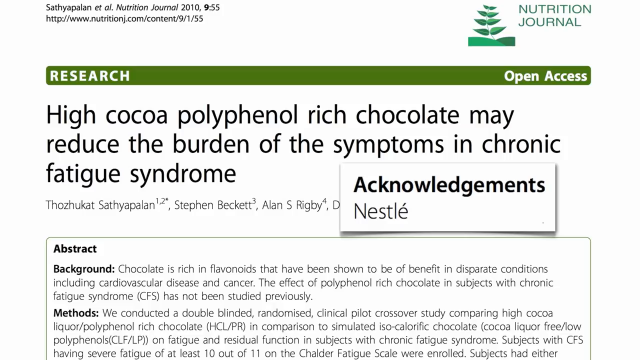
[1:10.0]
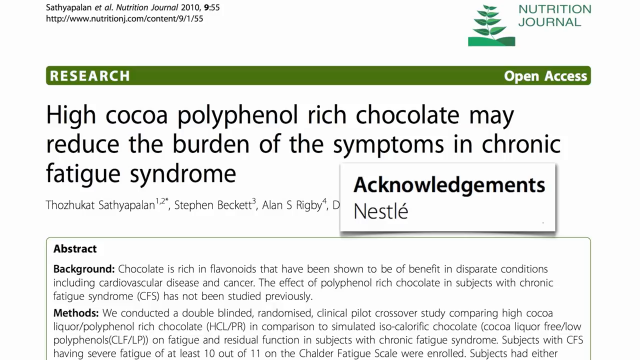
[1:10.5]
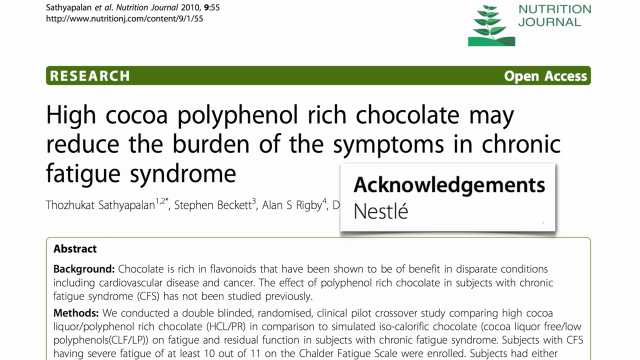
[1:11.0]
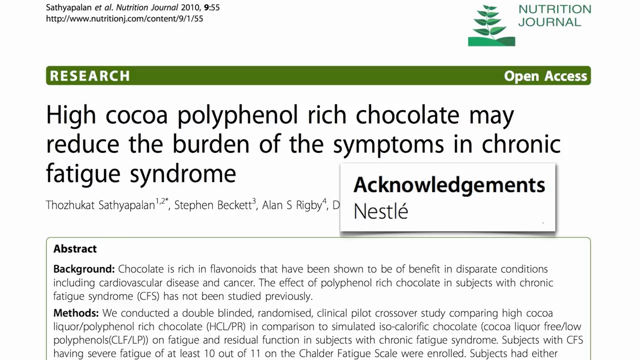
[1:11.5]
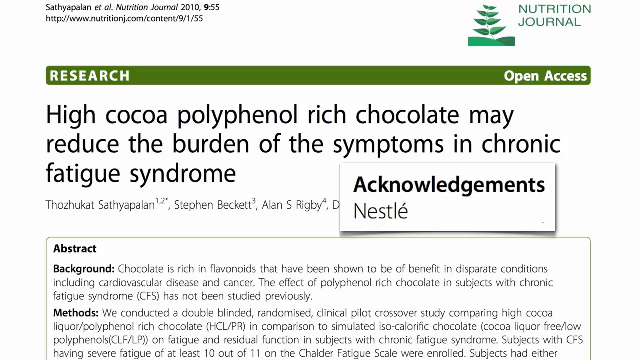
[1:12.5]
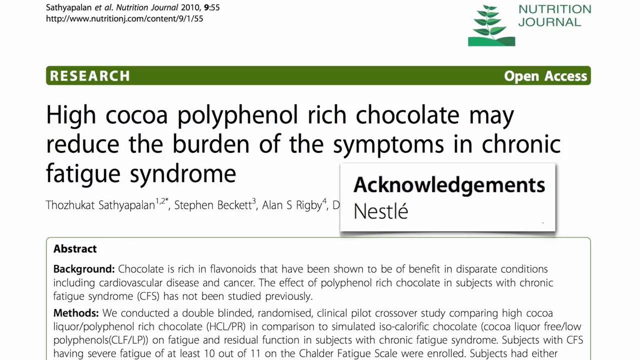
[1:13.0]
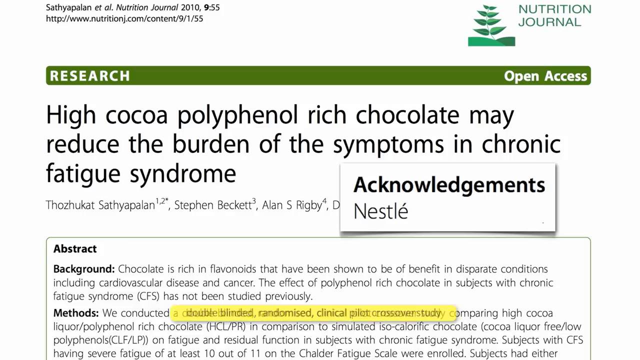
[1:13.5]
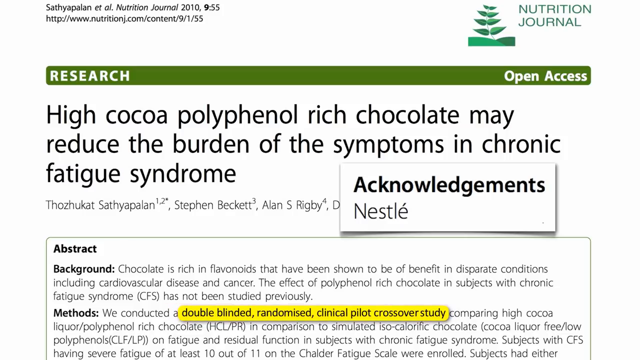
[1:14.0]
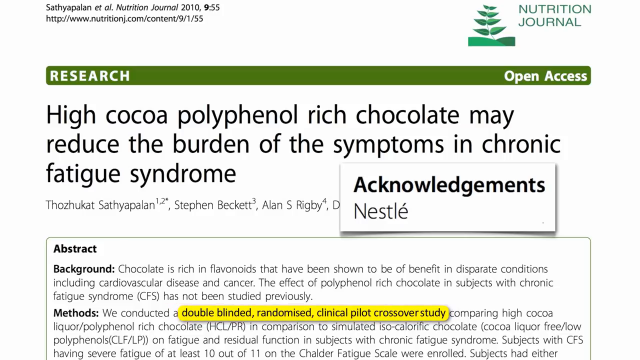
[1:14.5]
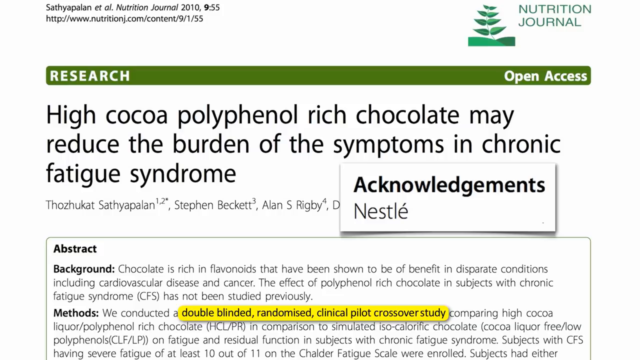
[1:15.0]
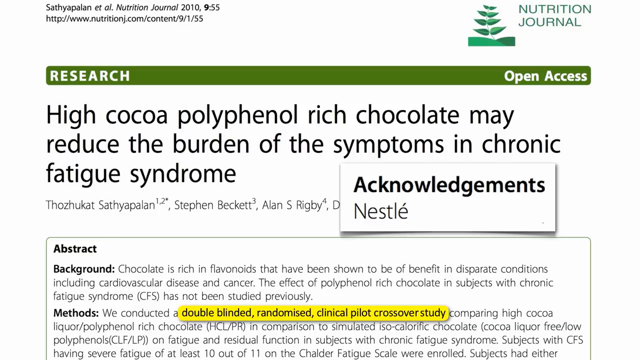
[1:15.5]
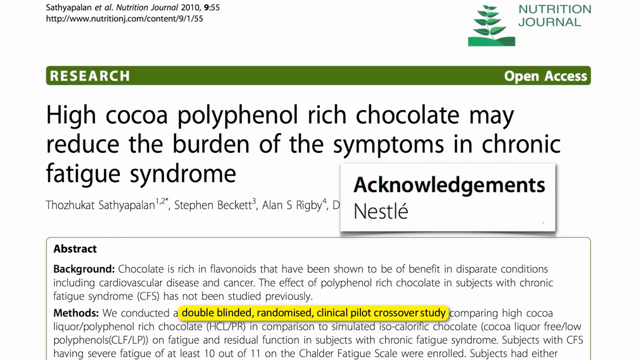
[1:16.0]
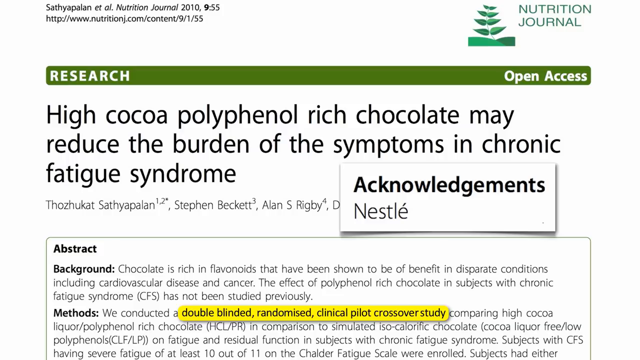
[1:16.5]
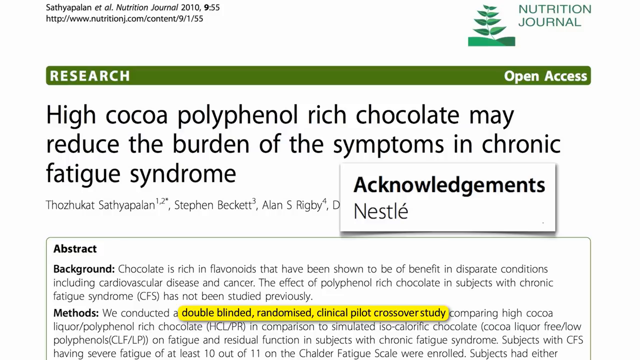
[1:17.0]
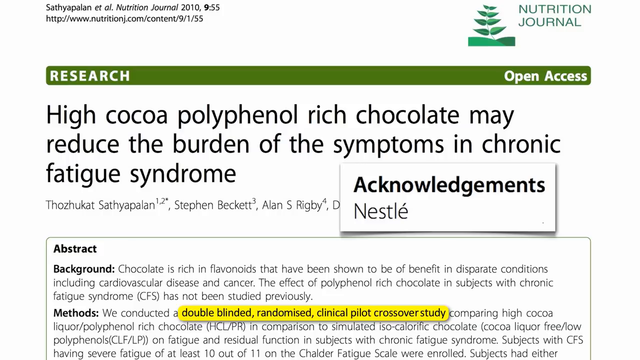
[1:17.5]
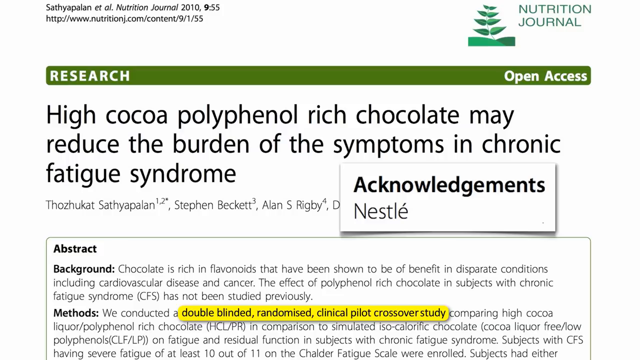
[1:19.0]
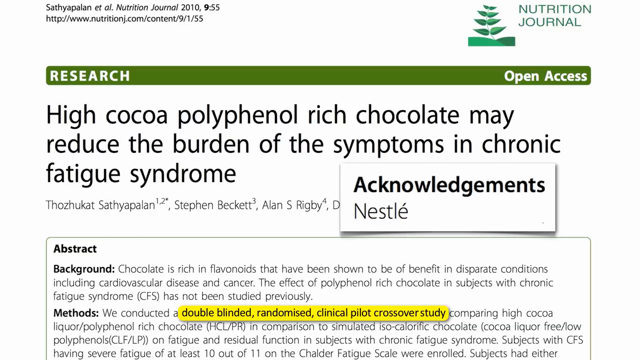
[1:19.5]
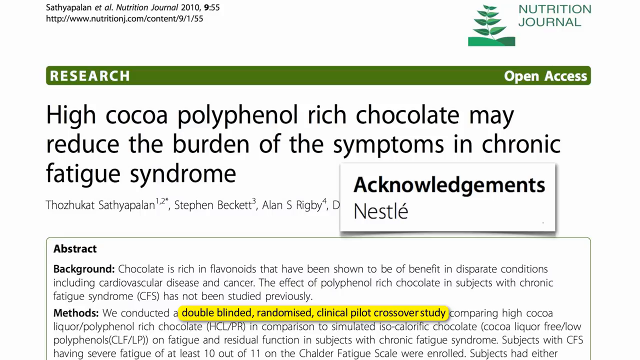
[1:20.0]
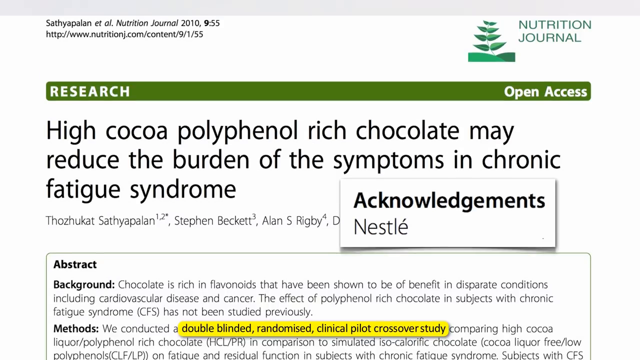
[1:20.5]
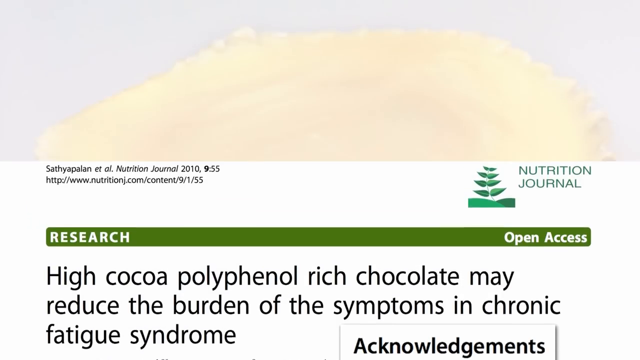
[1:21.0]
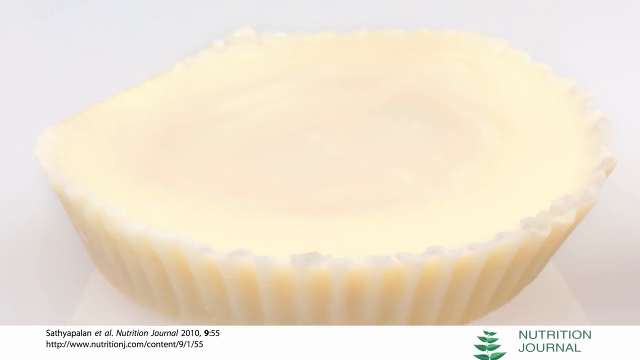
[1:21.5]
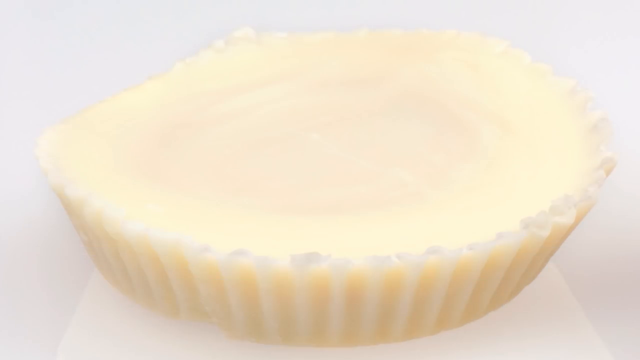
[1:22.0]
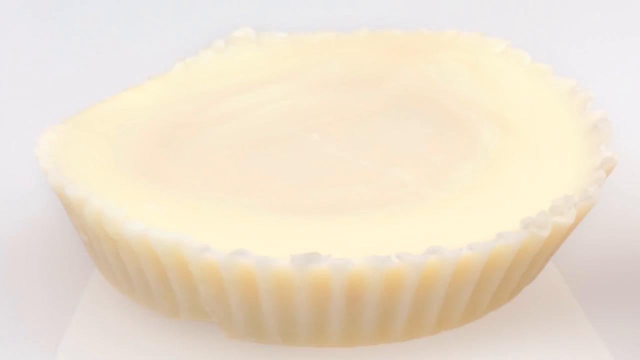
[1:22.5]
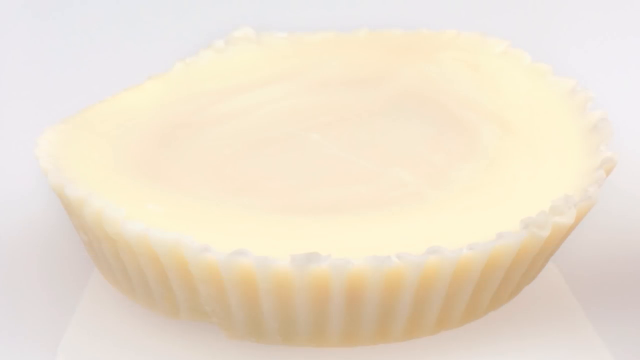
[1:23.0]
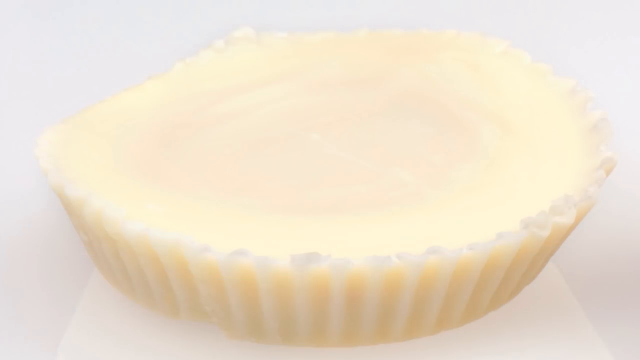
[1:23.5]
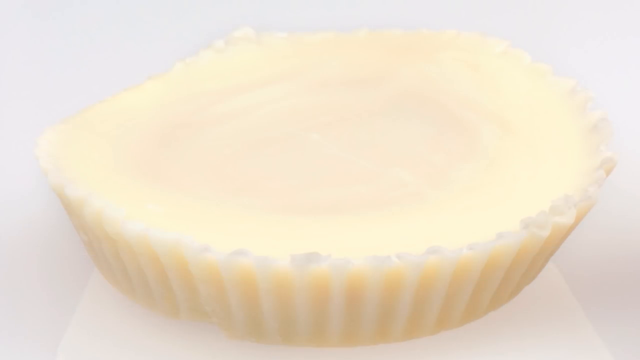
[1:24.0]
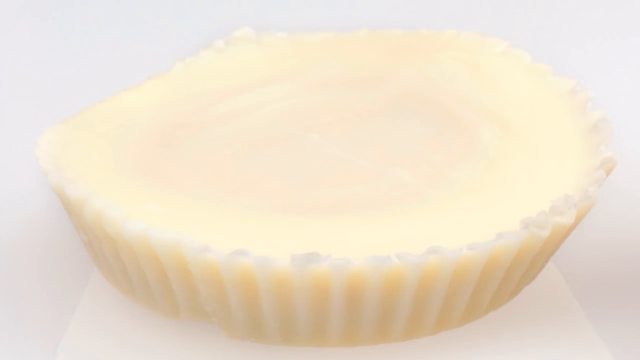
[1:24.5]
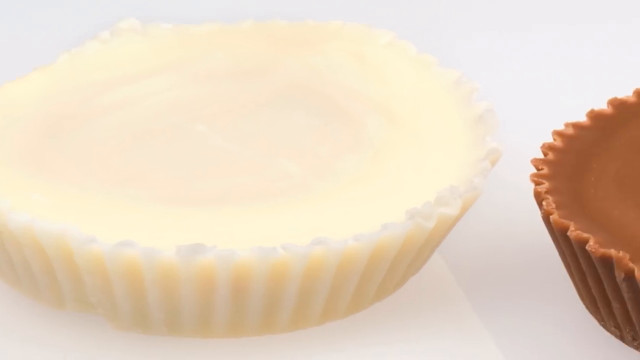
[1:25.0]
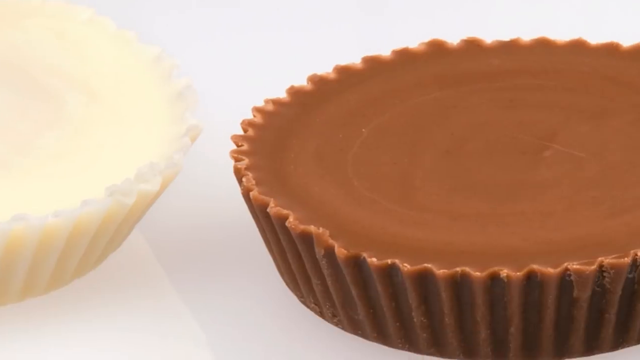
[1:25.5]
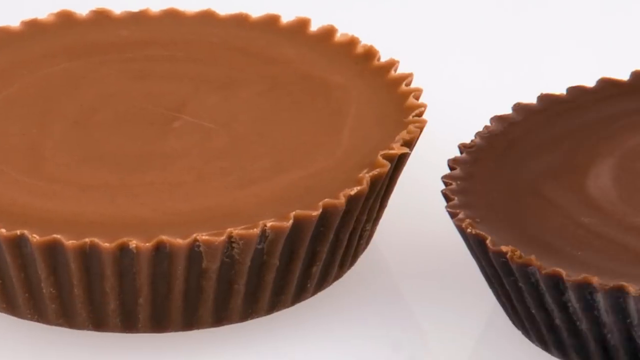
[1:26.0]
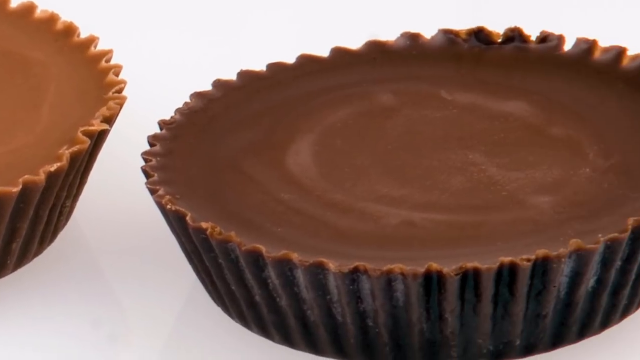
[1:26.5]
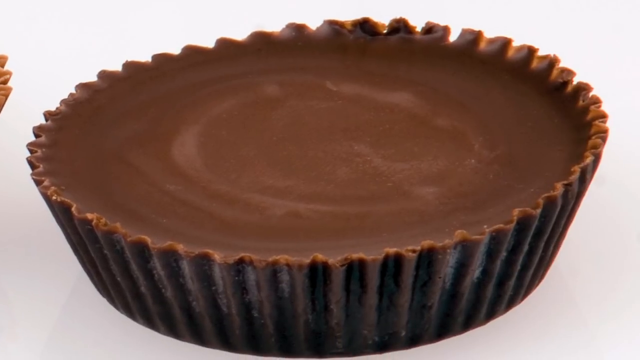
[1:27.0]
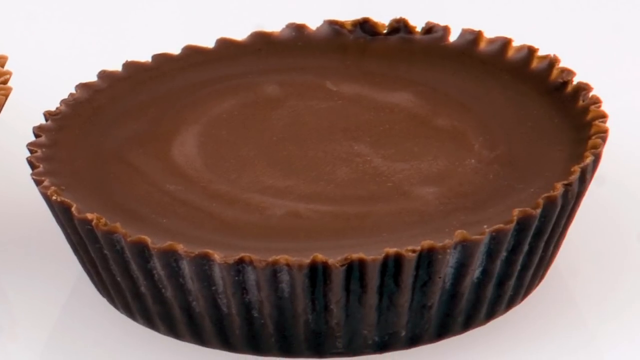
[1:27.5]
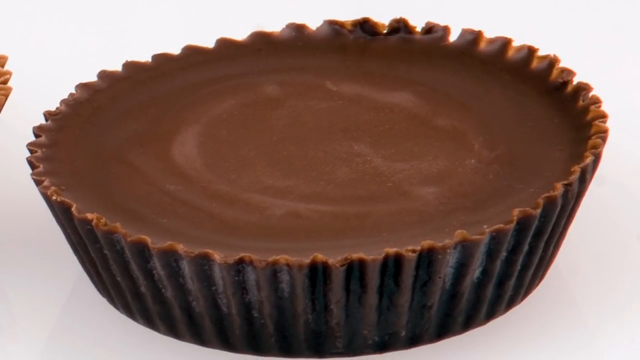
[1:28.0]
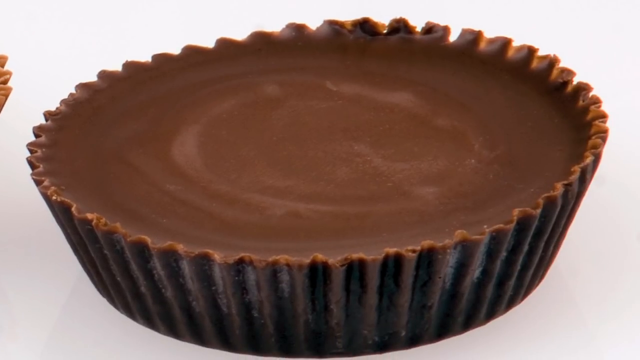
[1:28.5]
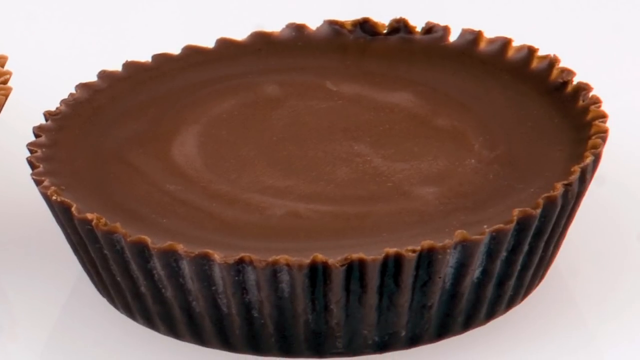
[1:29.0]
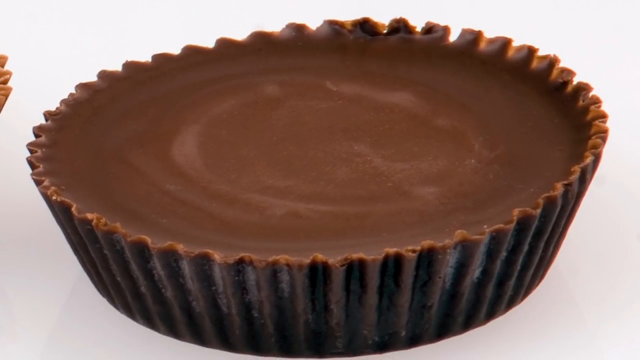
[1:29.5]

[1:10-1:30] A research article from the nutrition journal is shown, with its logo in the top right corner. Below the logo, a green banner has the text "research" on the left and "open access" on the right in white. Below this, the paper's title, "high cocoa, polyphenol, rich chocolate may reduce the burden of symptoms in chronic fatigue syndrome", is written in three lines in black, with the authors' names in small letters below. On the right side, below the title, "acknowledgments Nestle" appears in a box with a white background. The abstract is partly visible; in its methods section, "double-blinded randomized clinical pilot crossover study" in the first line is highlighted in yellow. The screen then transitions by moving down, and a peach-colored paper cup is slightly visible in the background. The view slides to the left, showing a brown, muffin-like thing, and keeps moving left until a dark-colored version of the same muffin is visible.